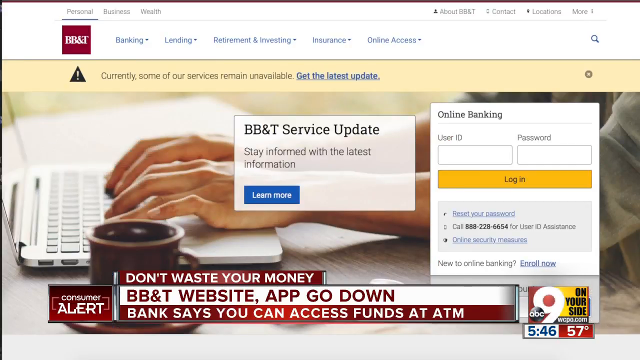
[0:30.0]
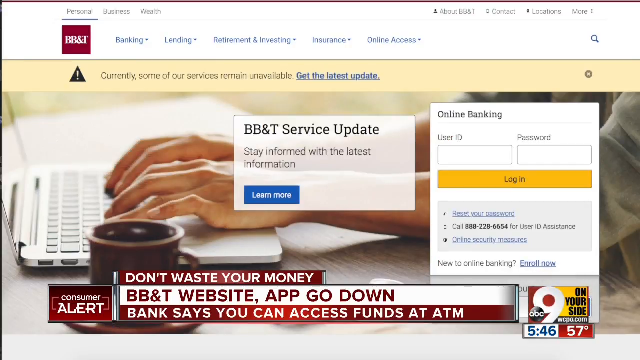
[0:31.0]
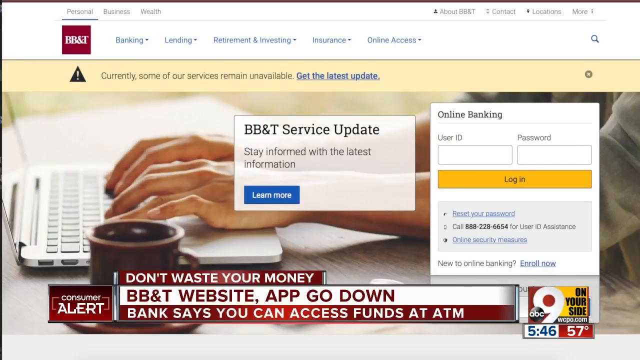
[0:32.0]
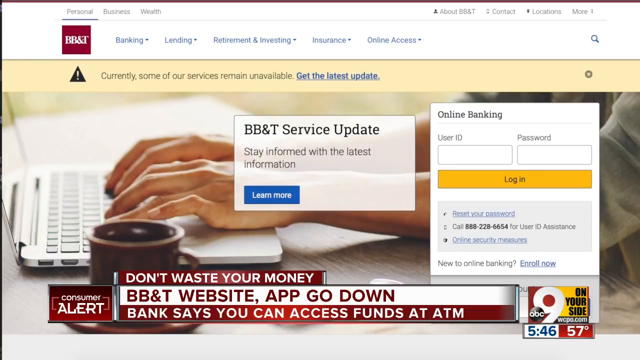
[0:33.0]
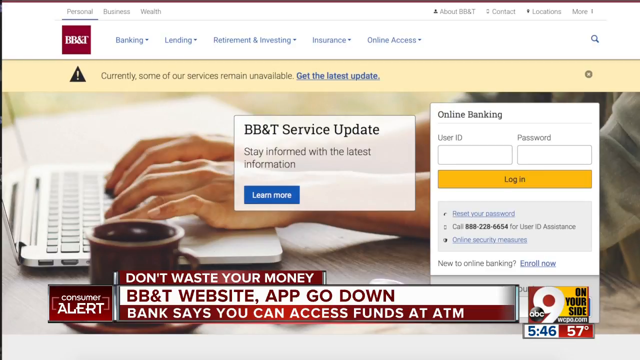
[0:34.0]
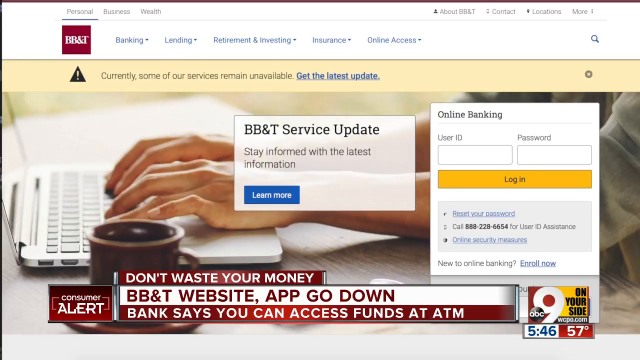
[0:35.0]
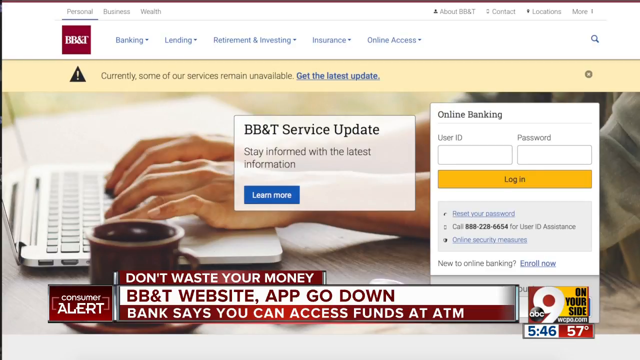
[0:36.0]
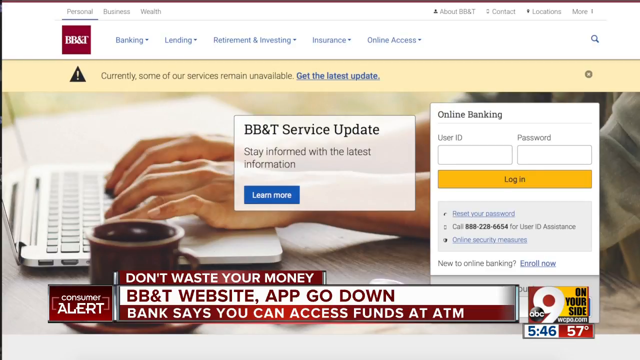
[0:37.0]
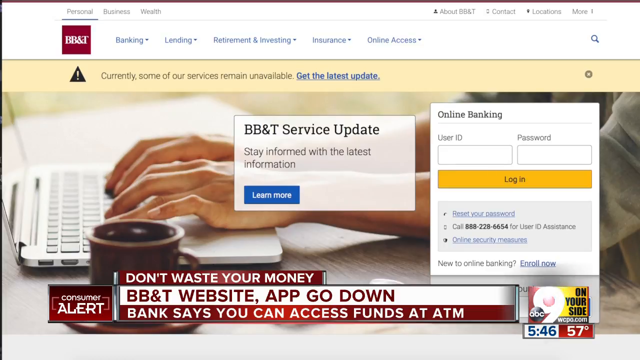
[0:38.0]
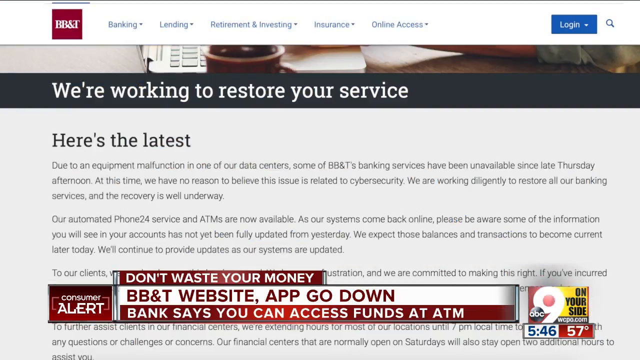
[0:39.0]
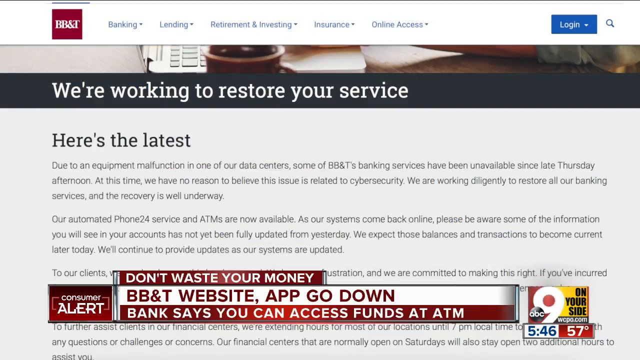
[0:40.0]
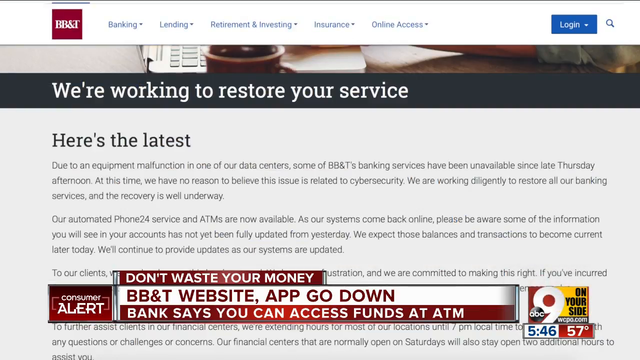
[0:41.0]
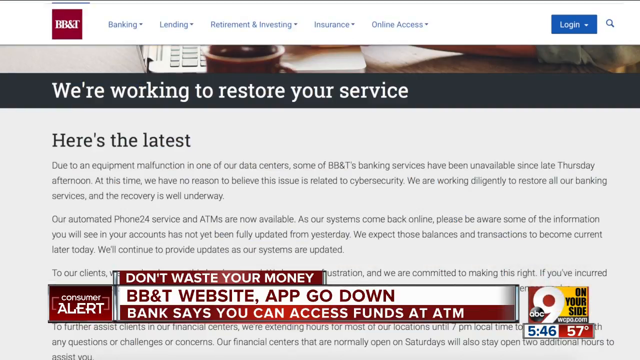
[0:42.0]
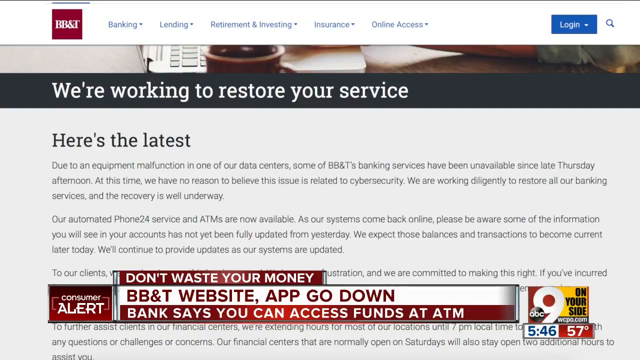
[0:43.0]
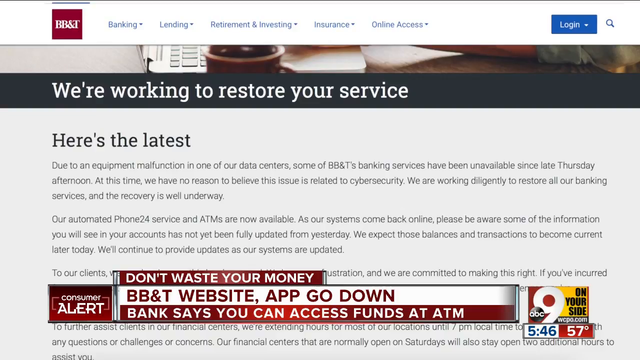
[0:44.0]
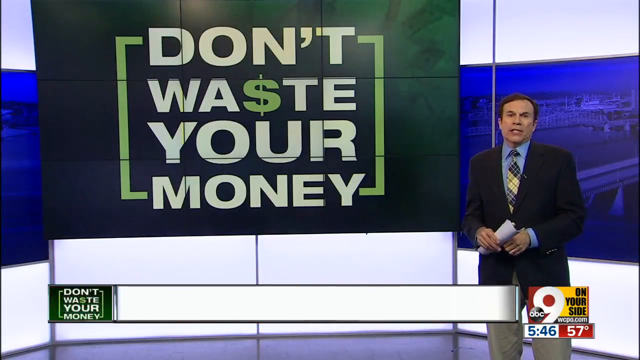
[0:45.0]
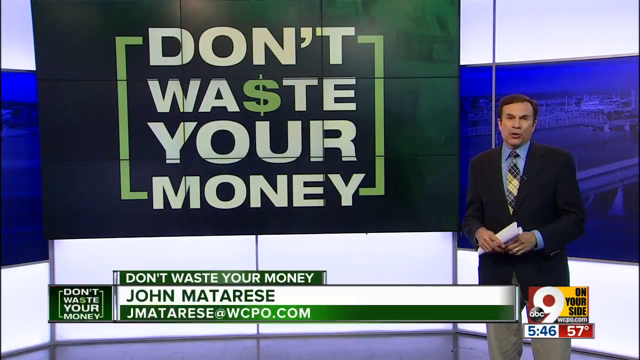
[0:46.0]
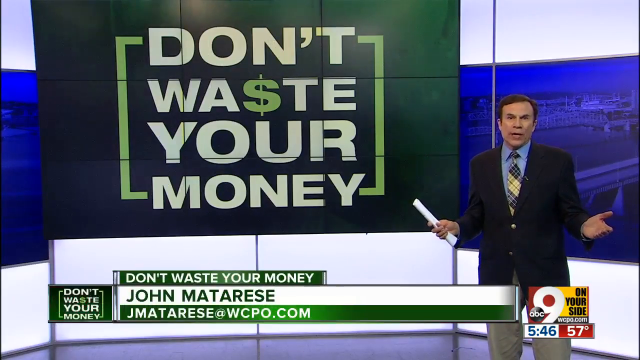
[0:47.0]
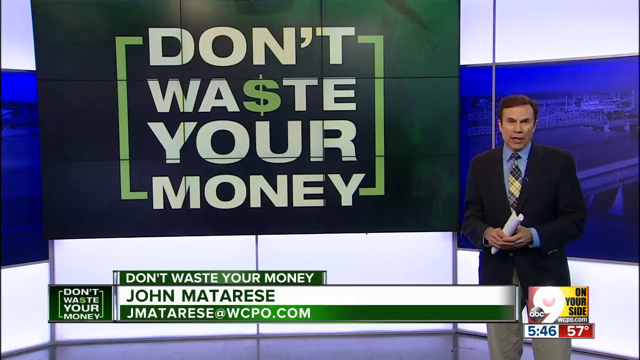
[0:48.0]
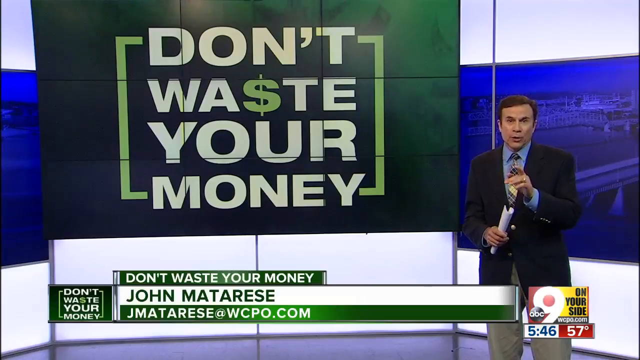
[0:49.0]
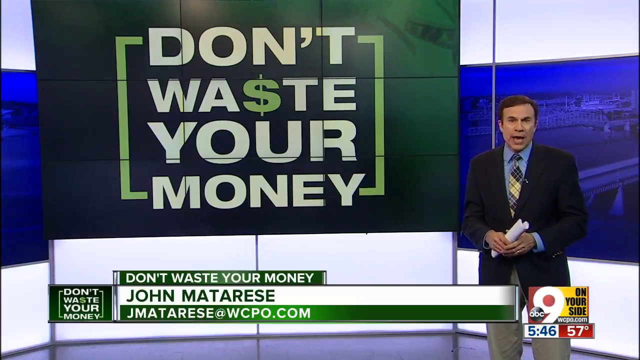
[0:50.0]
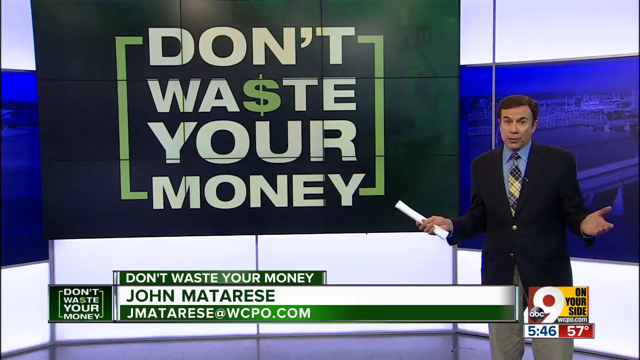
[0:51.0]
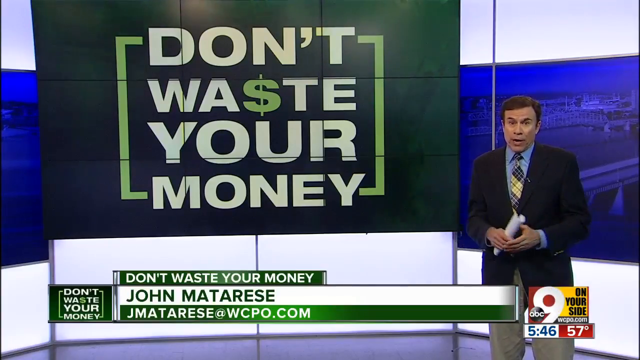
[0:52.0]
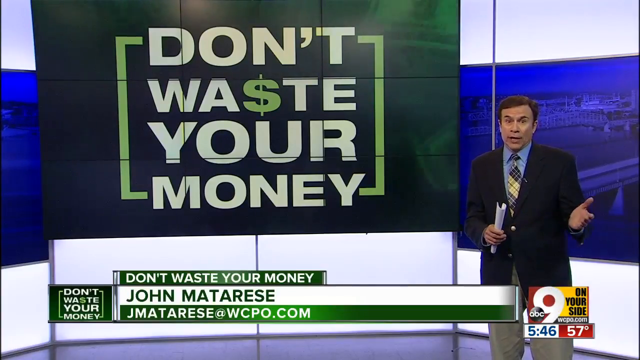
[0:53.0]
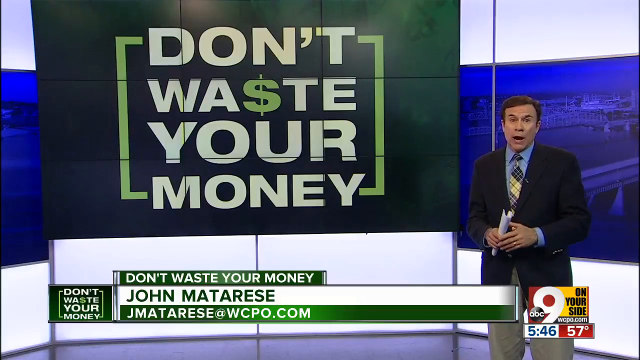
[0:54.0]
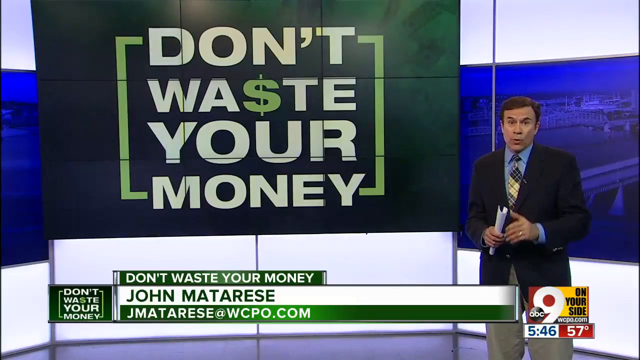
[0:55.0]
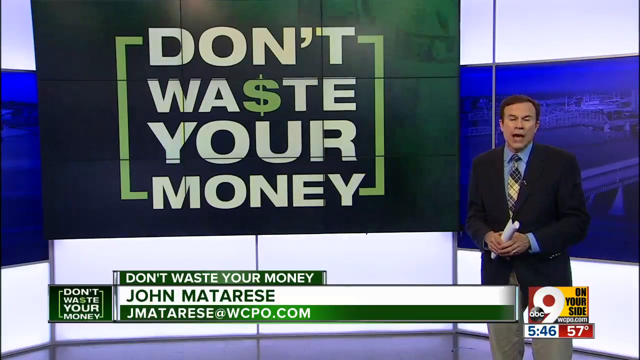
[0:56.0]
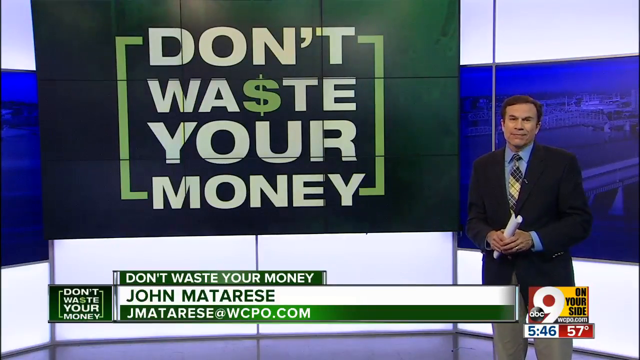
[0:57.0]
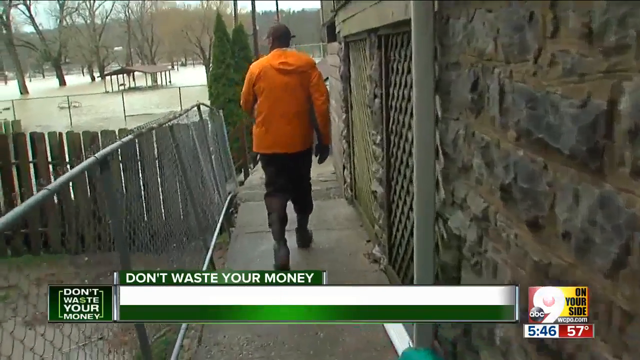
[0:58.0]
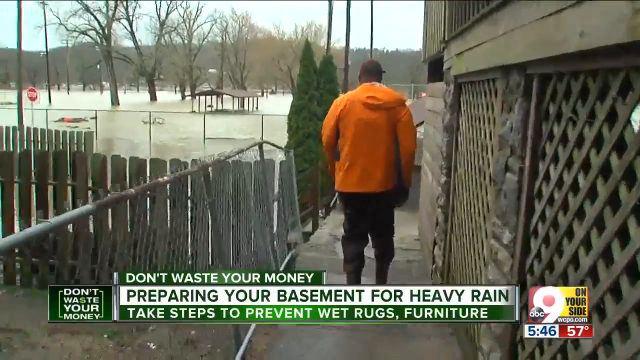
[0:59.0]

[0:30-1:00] The BB&T service update page on the bank's website is shown. There is a link stating that services are unavailable and a link for the latest updates, along with a tab for online banking sign-up. Next to it is a BB&T service update message that says "stay informed with the latest information" with a "learn more" option. The Channel 9 News segment text reads "don't waste your money" and "The BB&T website and app go down. The bank says you can still access your funds at the ATM." After the link is clicked, a message appears: "we're working to restore your service. Here's the latest. Due to an equipment malfunction in one of our data centers, some of BB&T's banking services have been unavailable since last Thursday afternoon. At this time we have no reason to believe the issue is related to cyber security. We are working diligently to restore all our banking services."